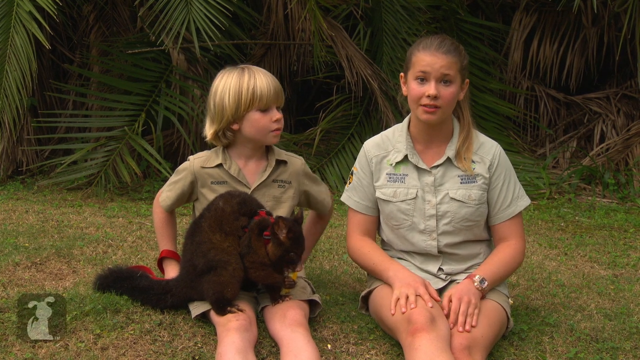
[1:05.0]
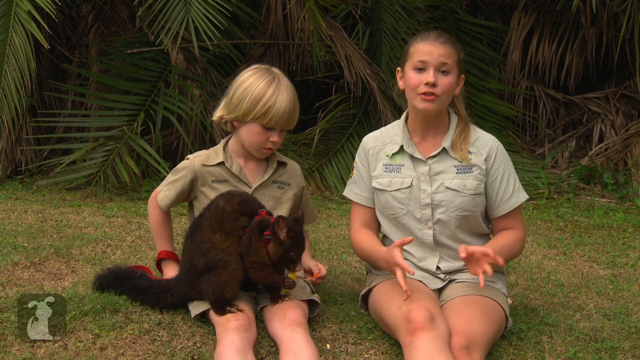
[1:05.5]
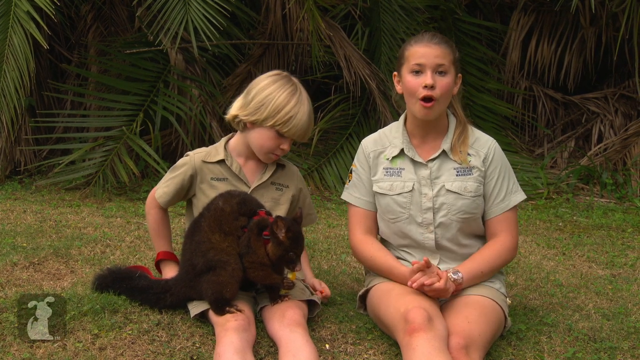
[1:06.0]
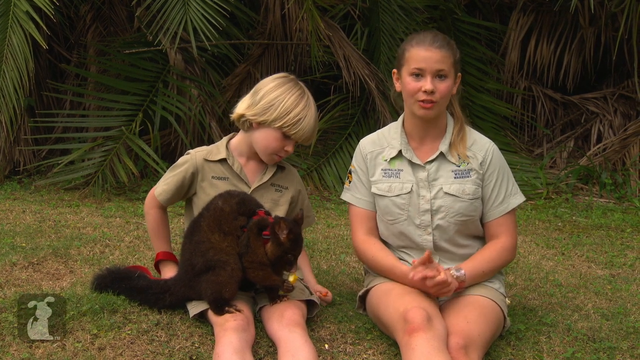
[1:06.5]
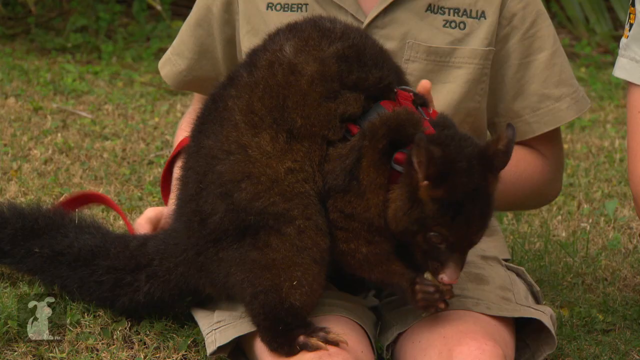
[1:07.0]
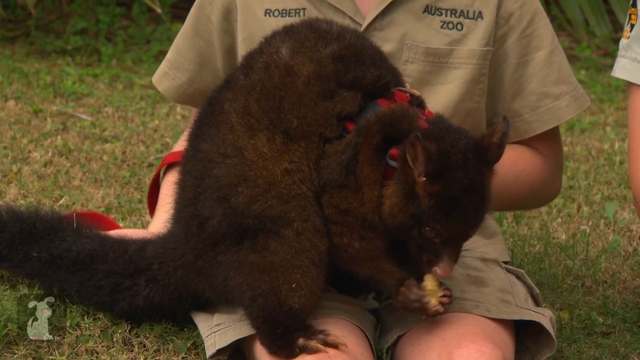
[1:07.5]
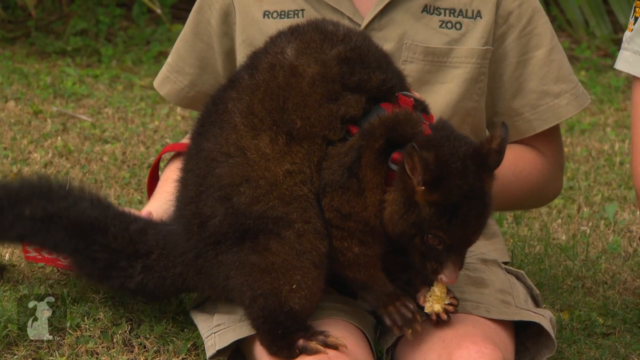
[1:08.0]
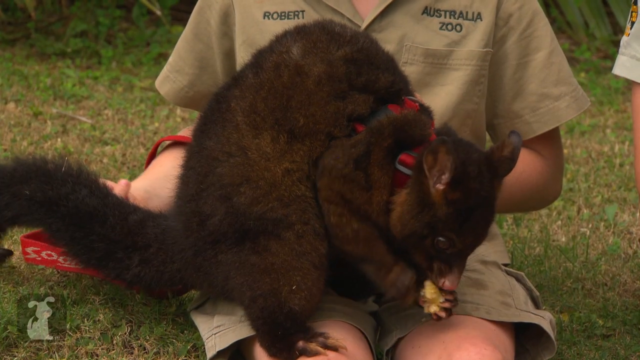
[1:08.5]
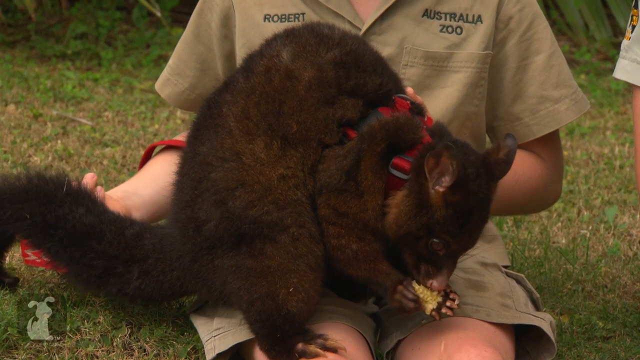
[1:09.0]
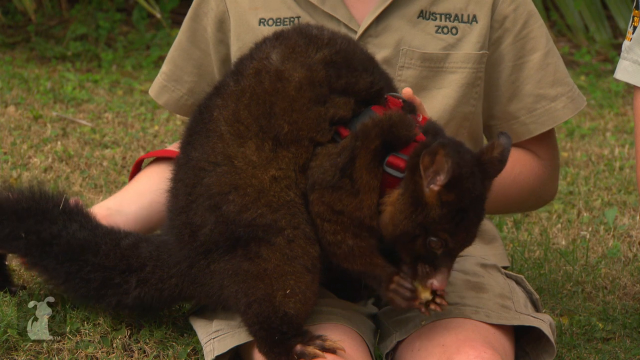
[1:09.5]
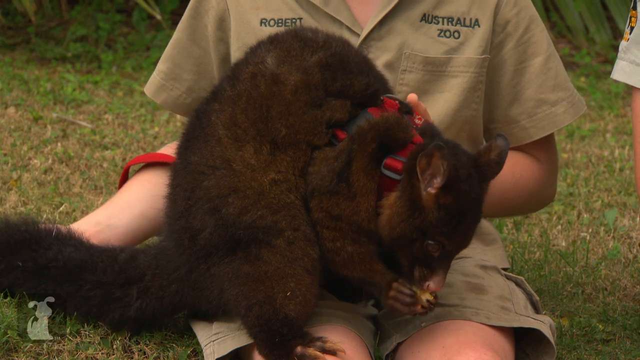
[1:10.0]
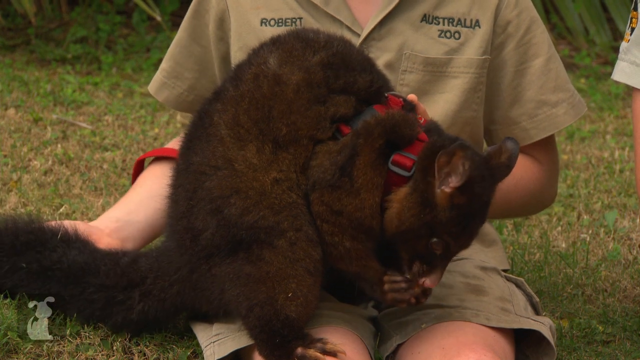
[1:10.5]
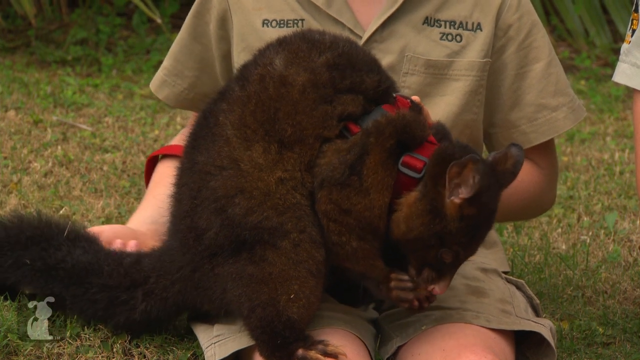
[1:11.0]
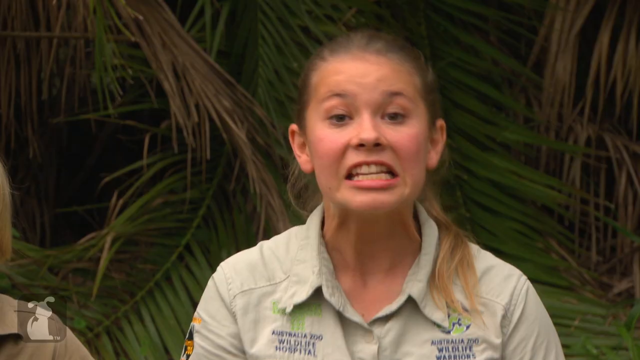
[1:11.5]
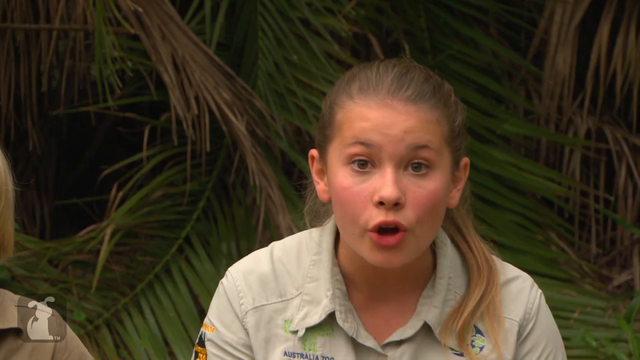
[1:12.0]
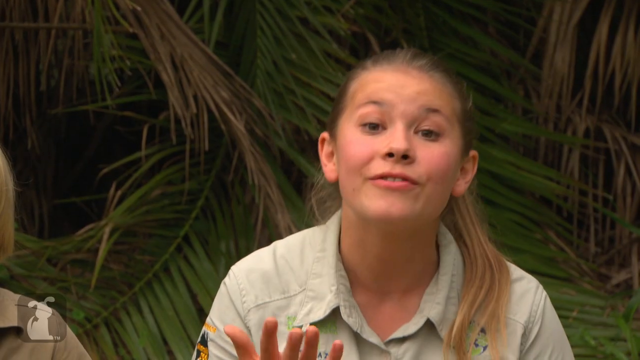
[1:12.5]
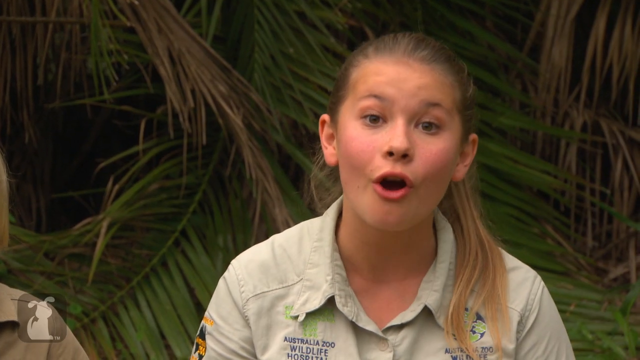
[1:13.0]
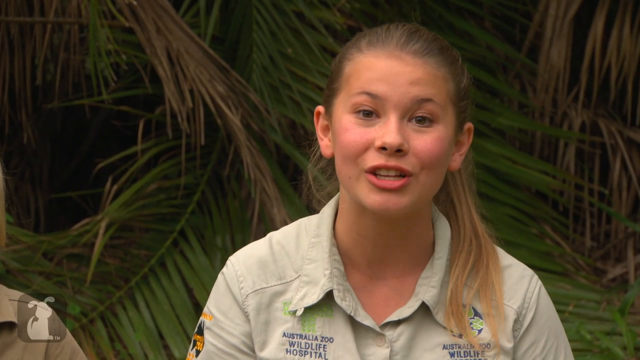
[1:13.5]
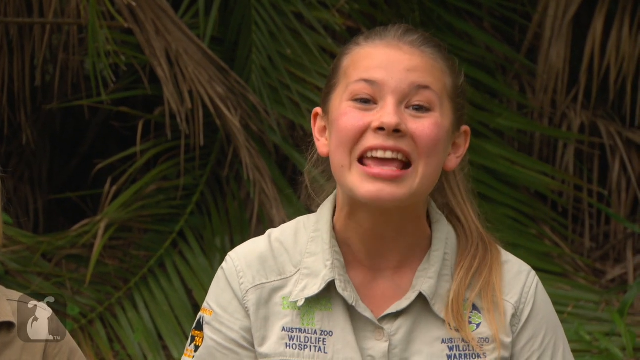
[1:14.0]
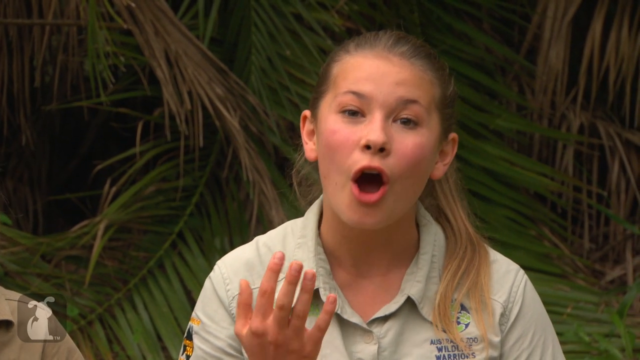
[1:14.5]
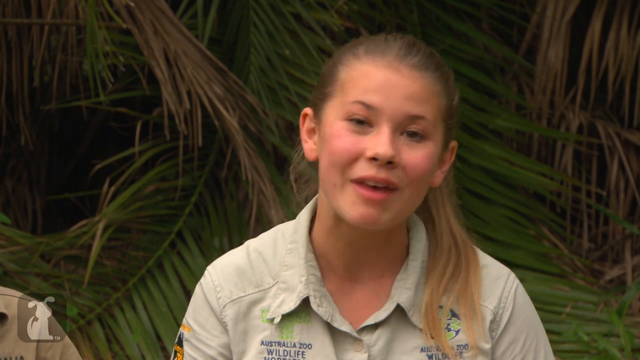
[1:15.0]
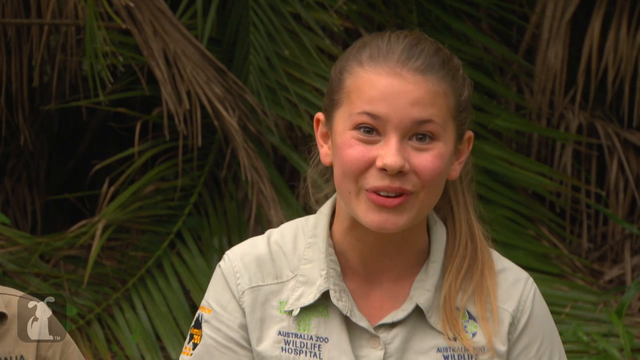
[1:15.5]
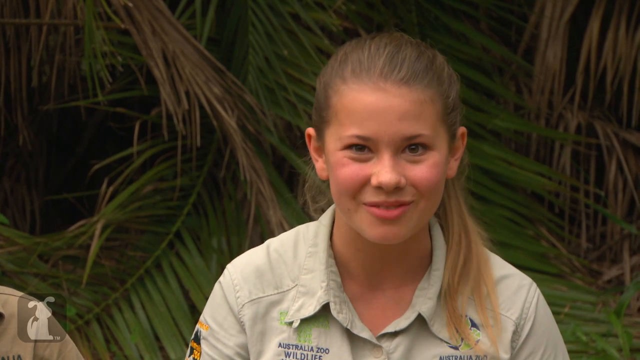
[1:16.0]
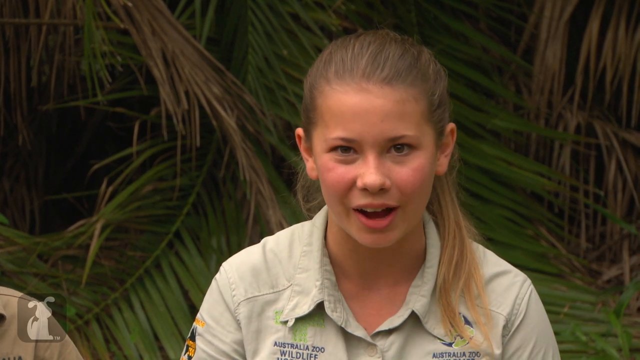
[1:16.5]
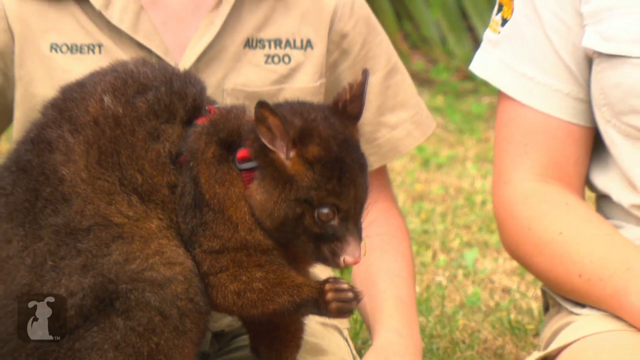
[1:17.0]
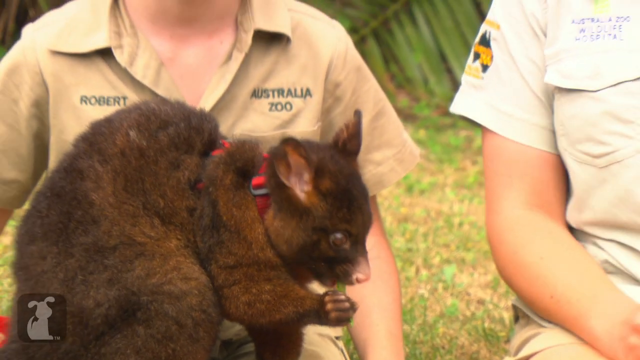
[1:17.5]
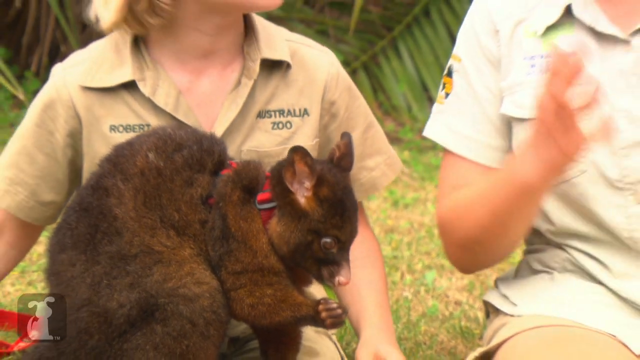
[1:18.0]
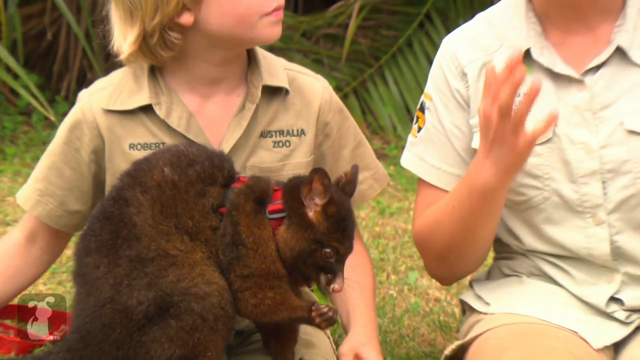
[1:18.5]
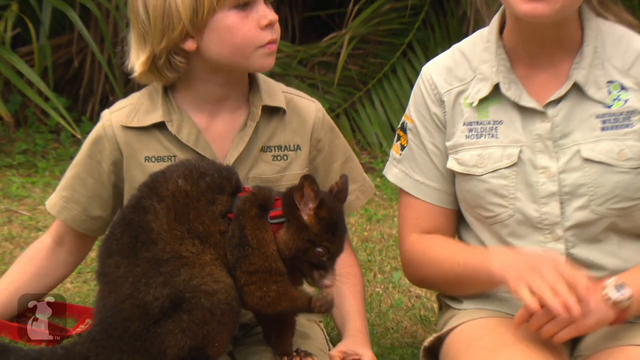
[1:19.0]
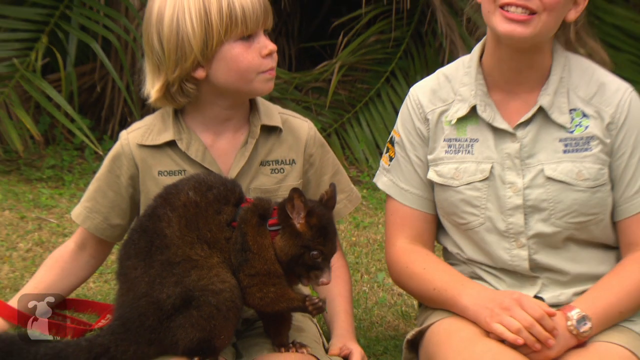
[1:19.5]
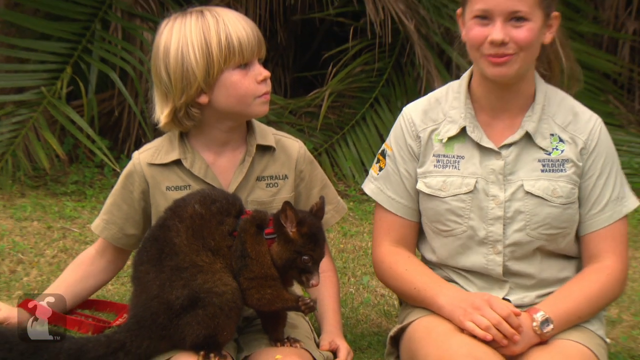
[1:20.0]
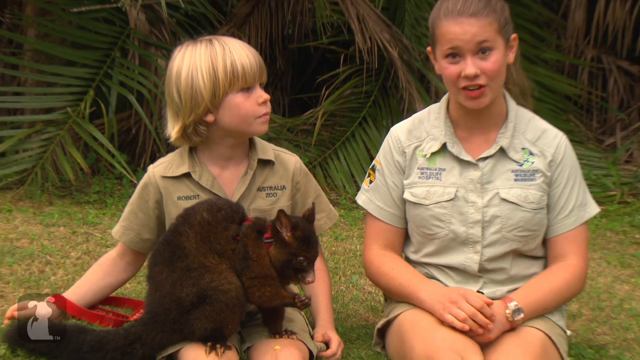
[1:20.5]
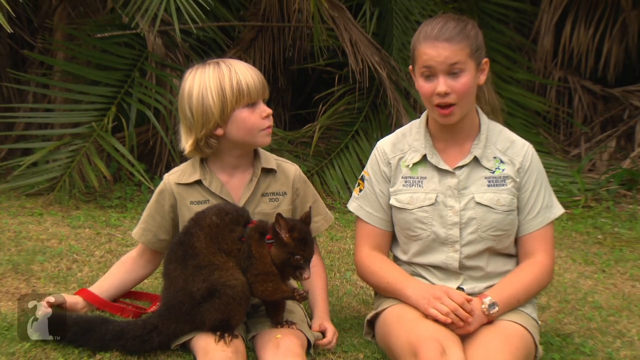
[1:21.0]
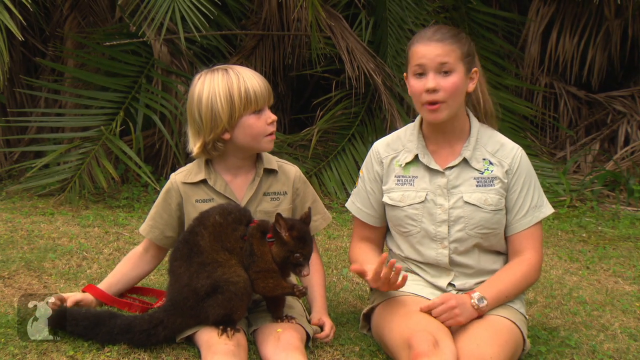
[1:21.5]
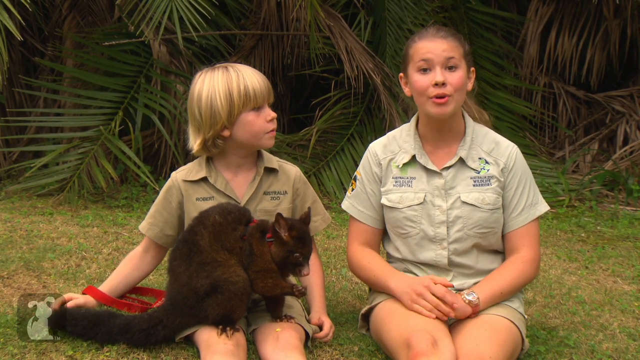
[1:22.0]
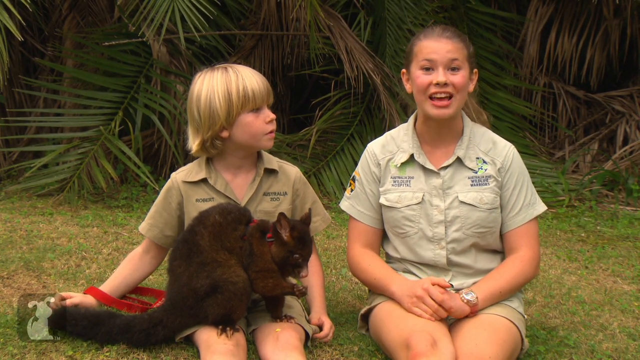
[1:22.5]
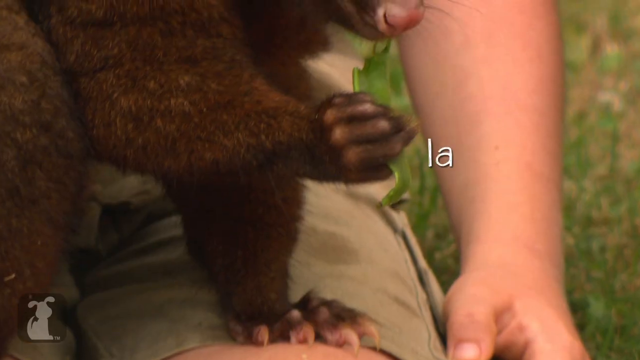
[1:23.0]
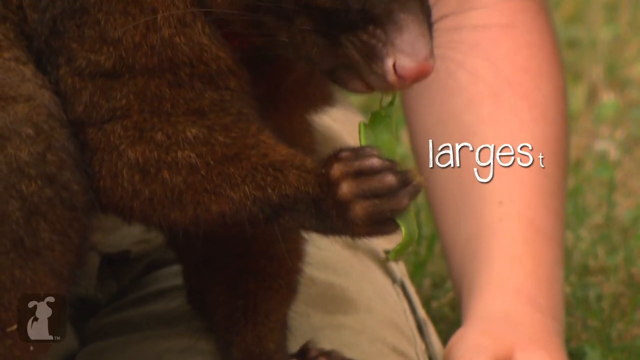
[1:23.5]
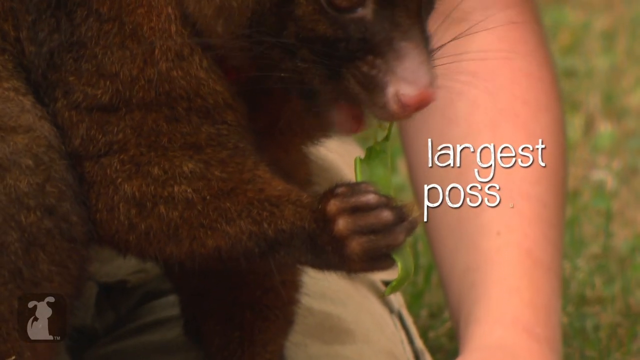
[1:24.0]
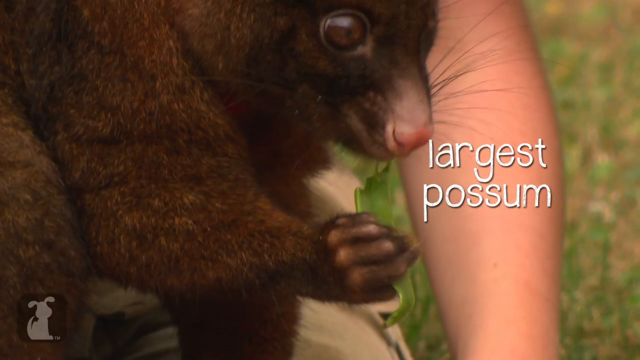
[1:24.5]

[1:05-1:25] The young boy and young girl, in shorts and shirts, sit on grass in front of tropical bushes in what appears to be a tropical setting. The camera zooms in and out as they enthusiastically talk about the possum, which has a red leash attached and is eating a piece of fruit. At one point a white subtitle reads "largest possum." The boy has the possum on his lap and pets it as it eats. An icon of a dog silhouette is on the left of the screen, and on the right is a pink icon with a cat and white text reading "subscribe."